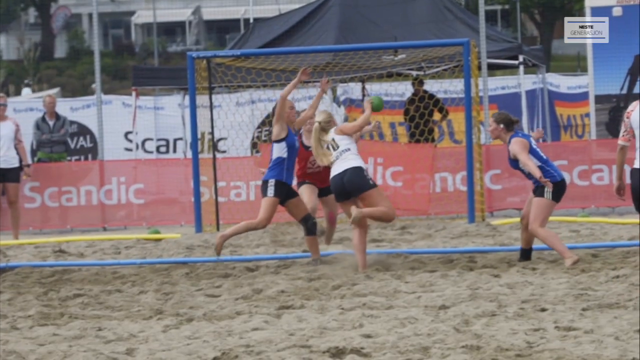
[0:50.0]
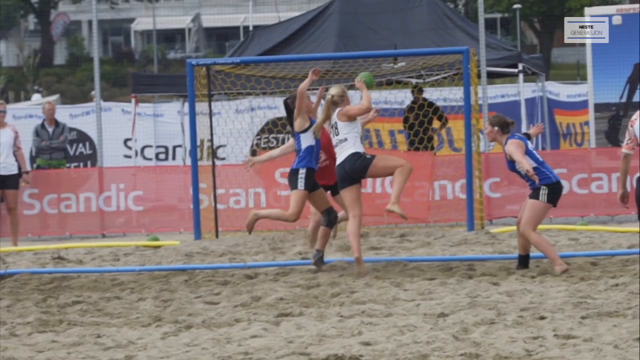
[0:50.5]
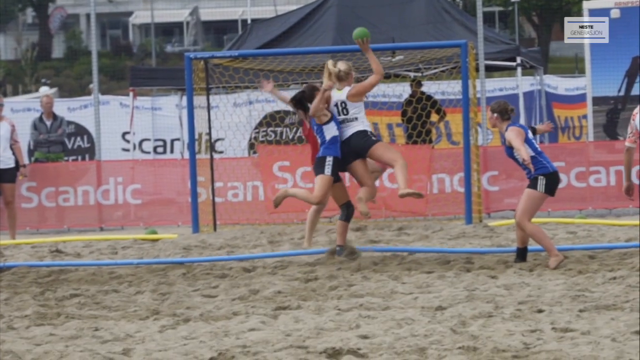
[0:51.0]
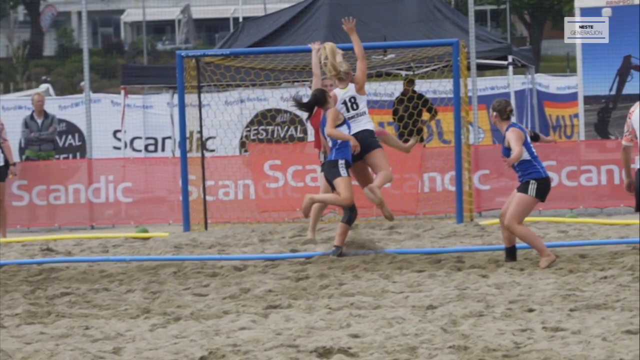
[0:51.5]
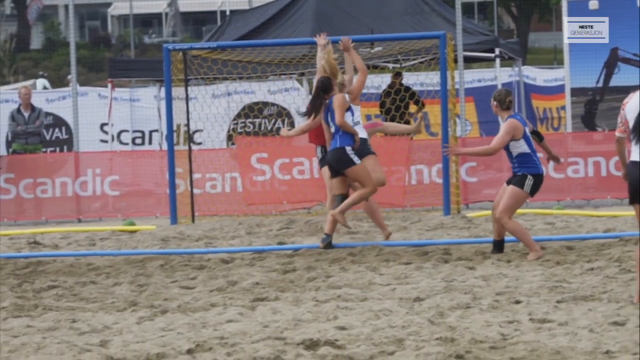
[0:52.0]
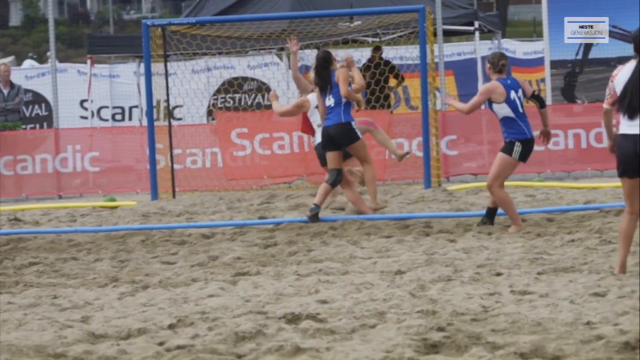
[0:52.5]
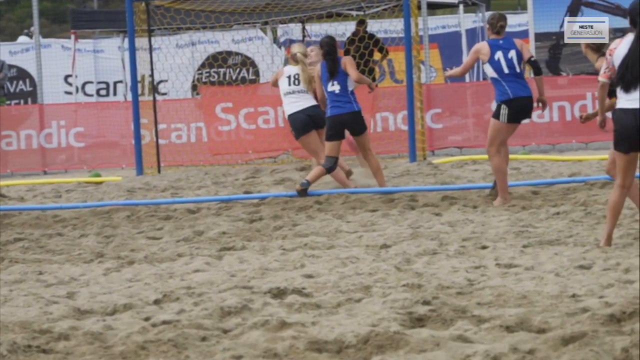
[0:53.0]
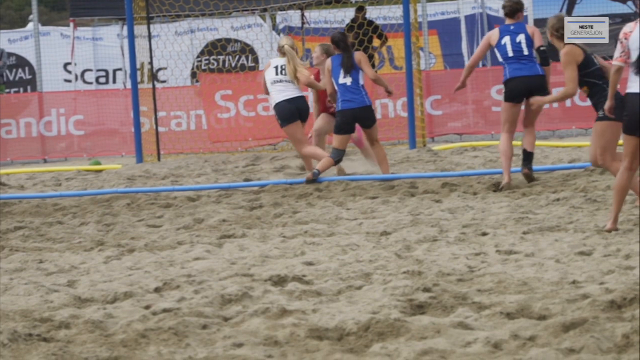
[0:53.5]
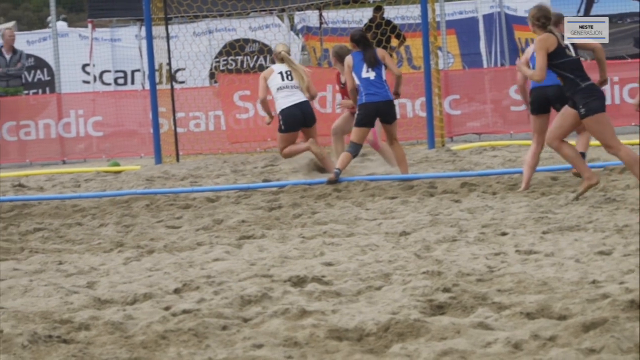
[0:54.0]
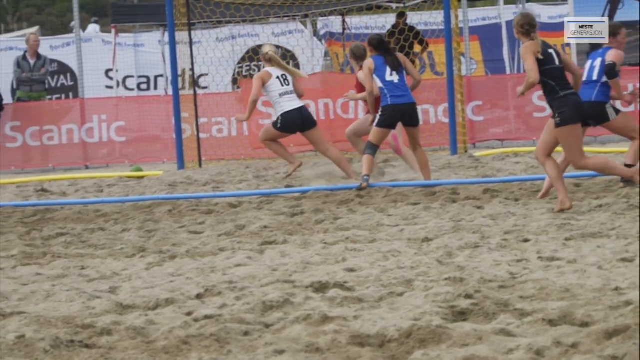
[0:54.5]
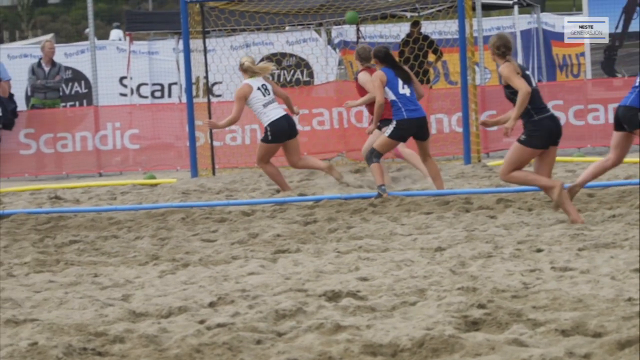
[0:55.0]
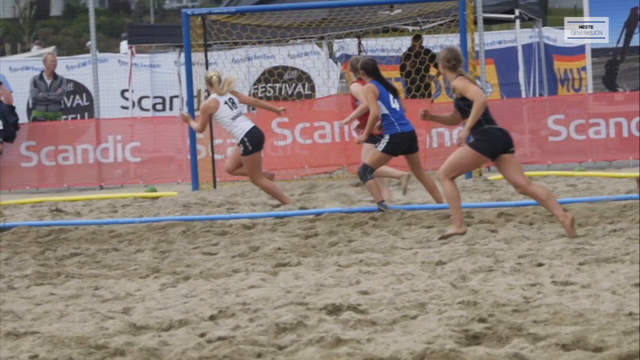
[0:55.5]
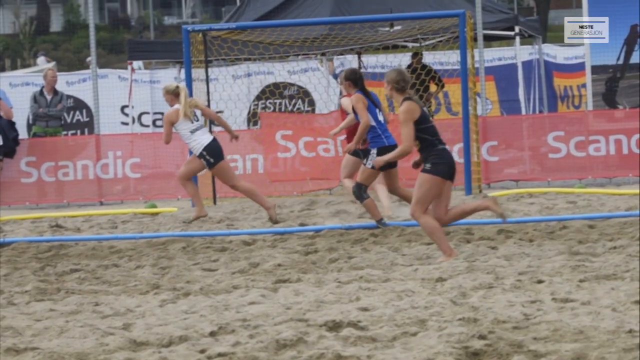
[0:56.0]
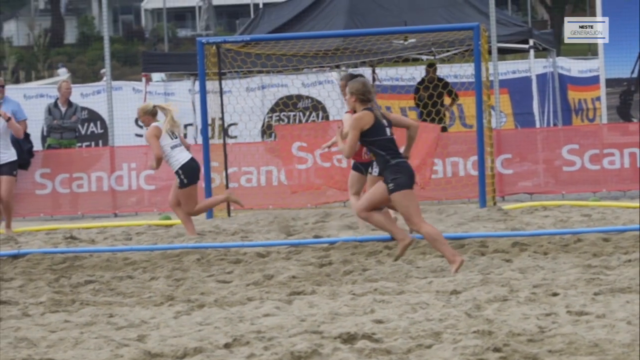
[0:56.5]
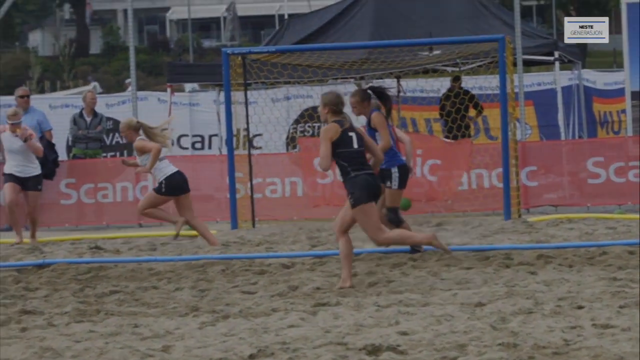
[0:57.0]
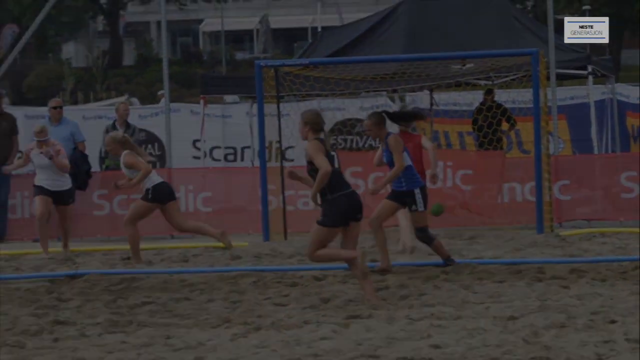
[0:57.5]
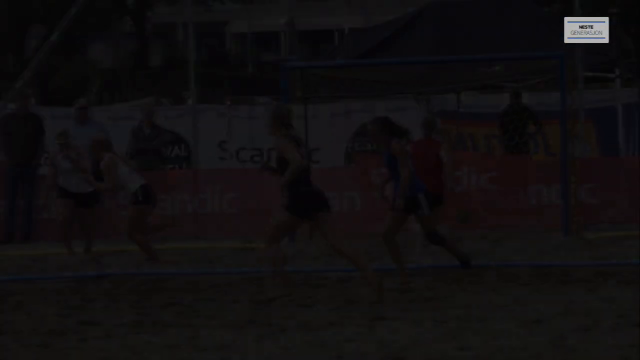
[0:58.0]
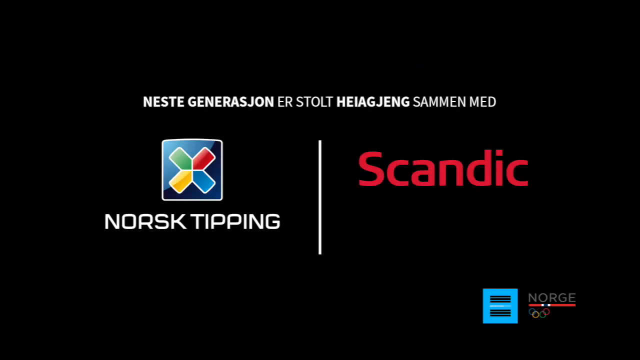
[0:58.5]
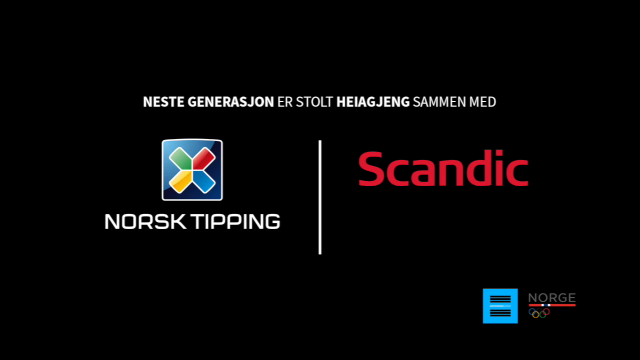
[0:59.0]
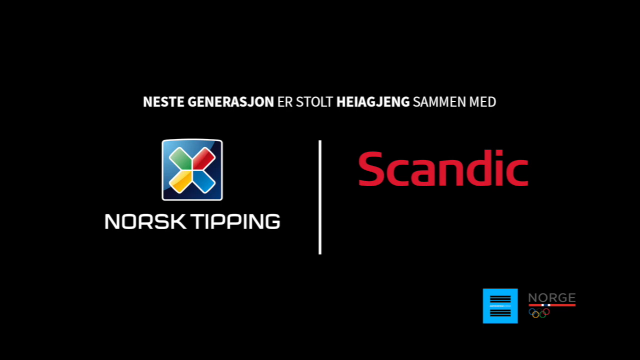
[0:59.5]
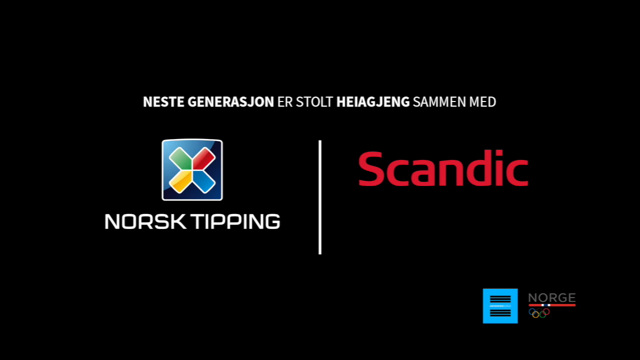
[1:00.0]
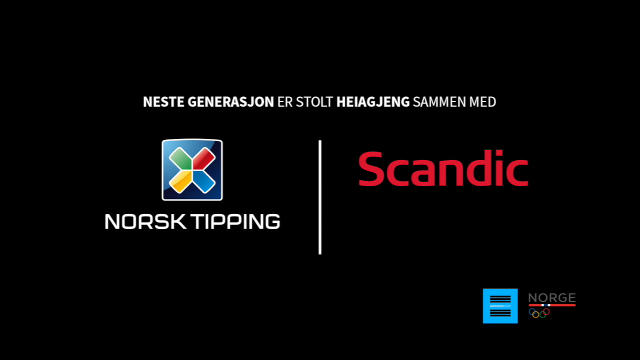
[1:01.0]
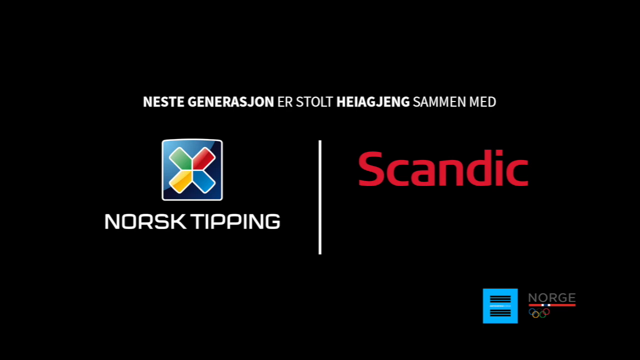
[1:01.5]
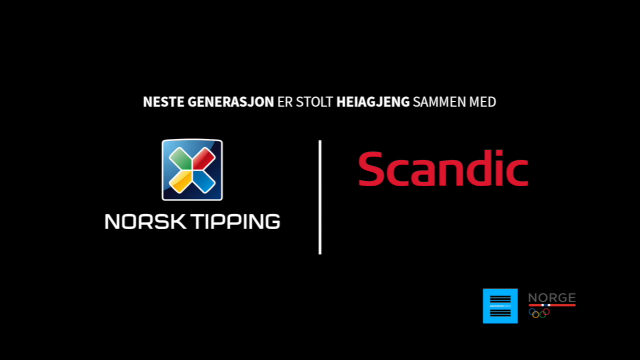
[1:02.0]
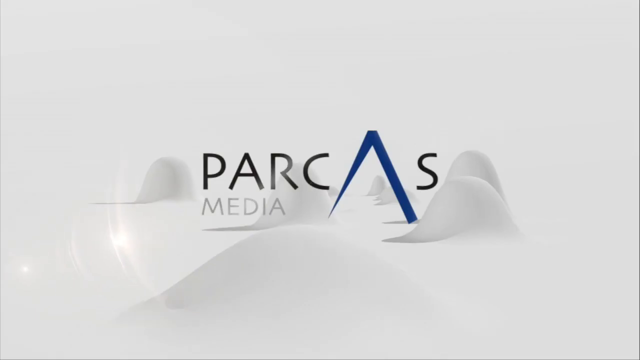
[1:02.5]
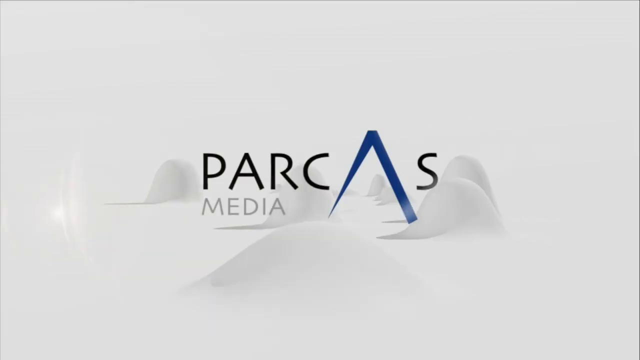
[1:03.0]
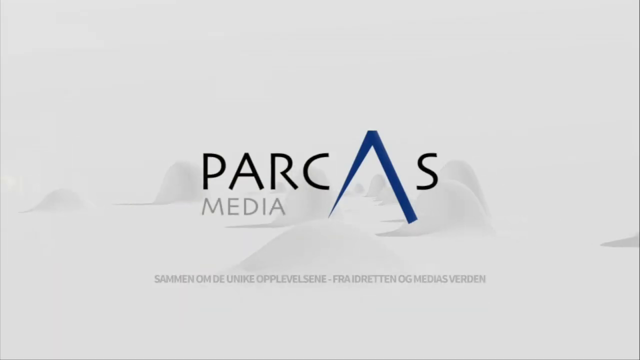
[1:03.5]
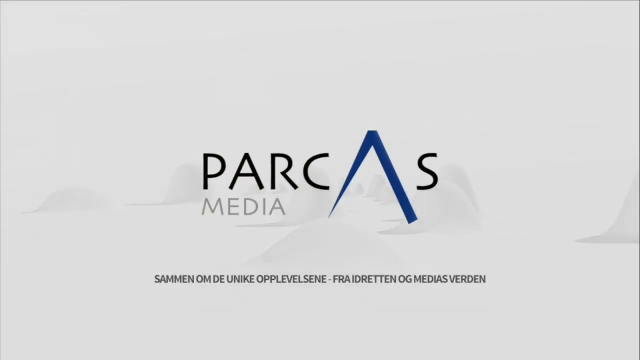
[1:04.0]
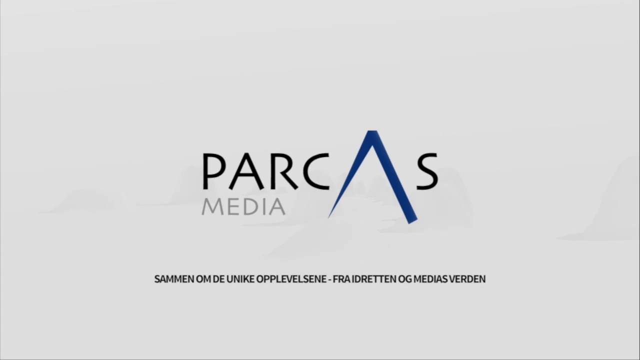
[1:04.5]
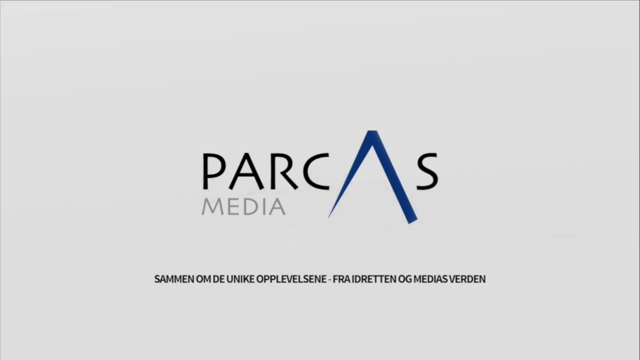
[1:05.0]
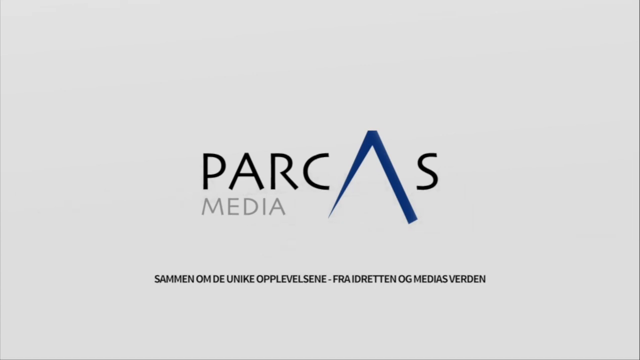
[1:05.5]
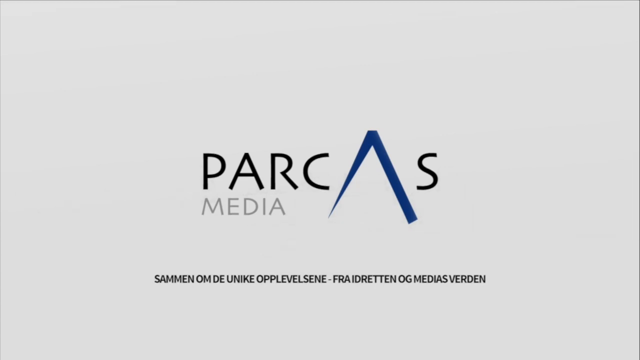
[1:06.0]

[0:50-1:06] A girl wearing number 18 throws the green ball into the net as the other team, wearing blue and red, tries to block it. Right after, Scandic and other advertisements, almost like sponsorships, appear. In the background, people are watching: a man in a gray jacket stands with his arms folded, and other men on the other side of the net watch the play. There is what appears to be some sort of tent in the background, along with advertising banners for Scandic and a festival. Yellow markers and blue playing field markers are on the sand. The girls play in the sand without shoes and wear black shorts. The teams are separated by color.